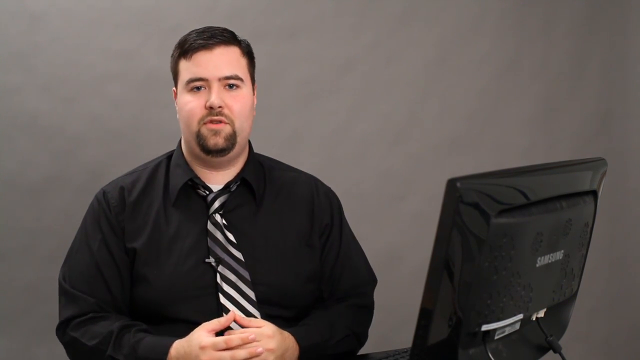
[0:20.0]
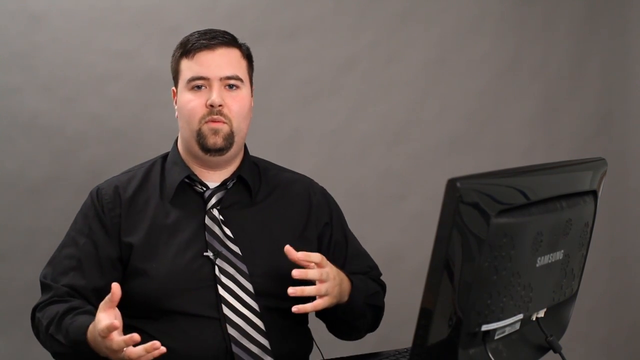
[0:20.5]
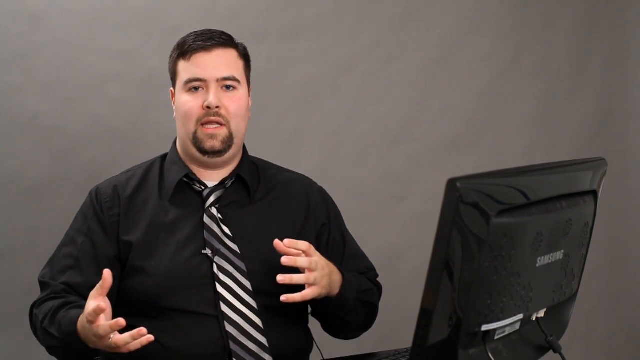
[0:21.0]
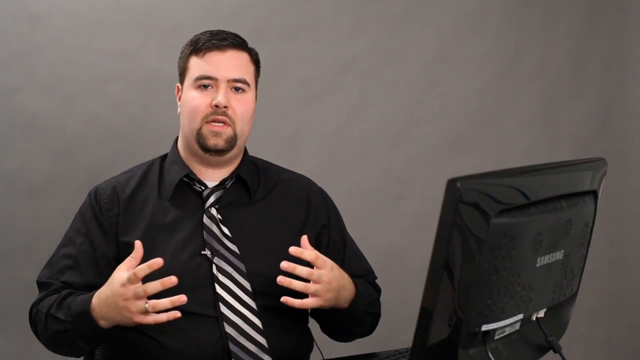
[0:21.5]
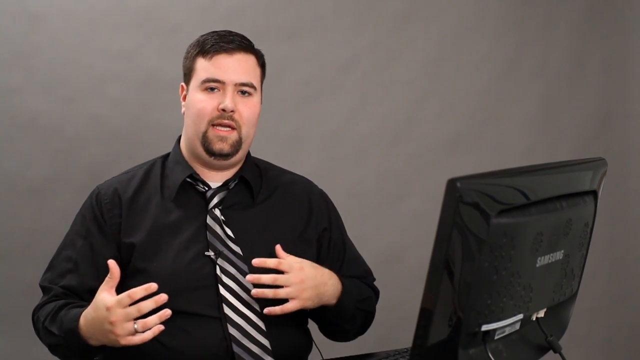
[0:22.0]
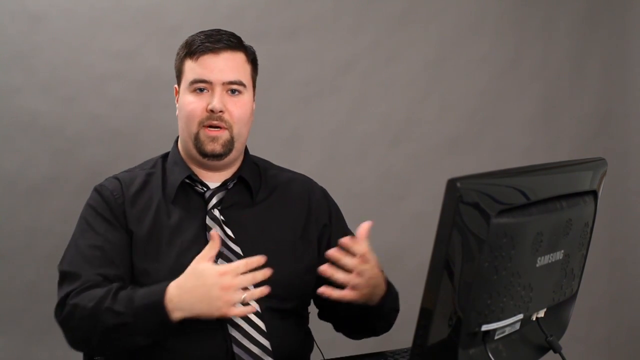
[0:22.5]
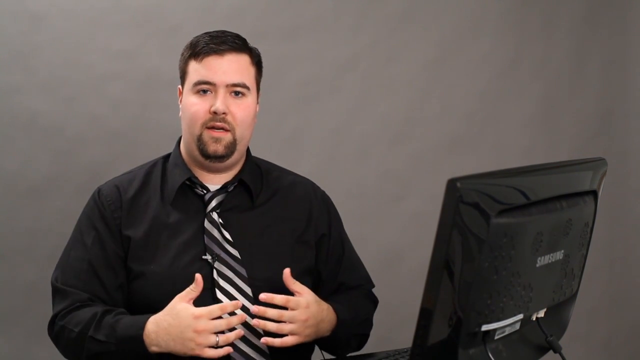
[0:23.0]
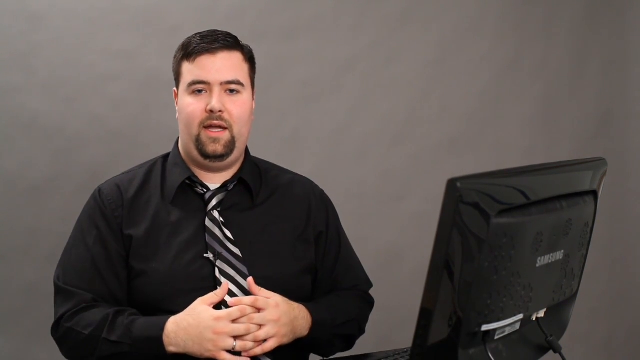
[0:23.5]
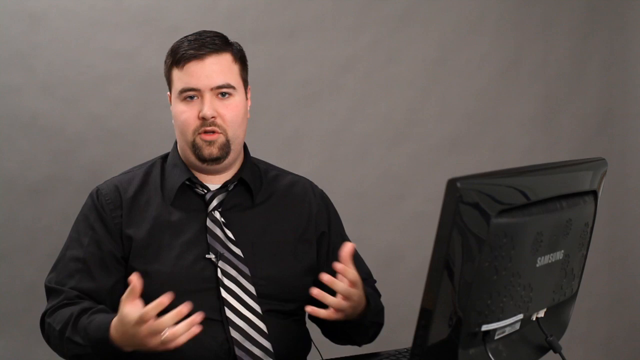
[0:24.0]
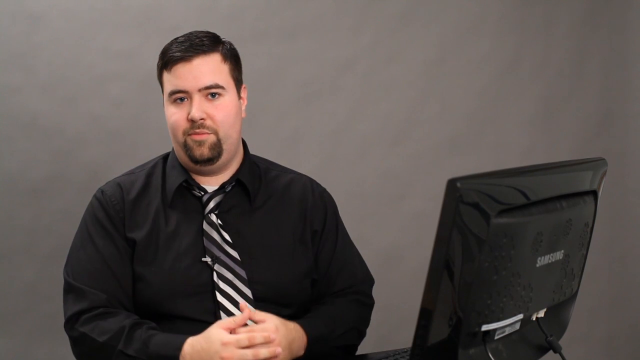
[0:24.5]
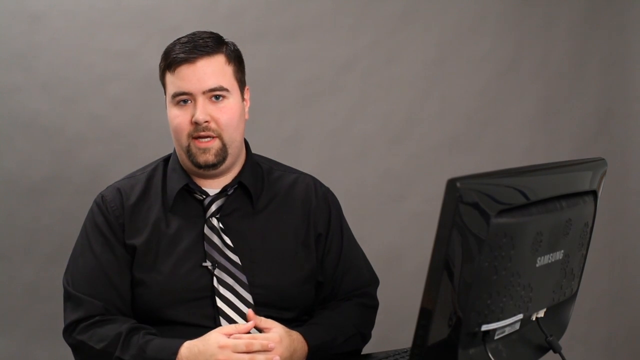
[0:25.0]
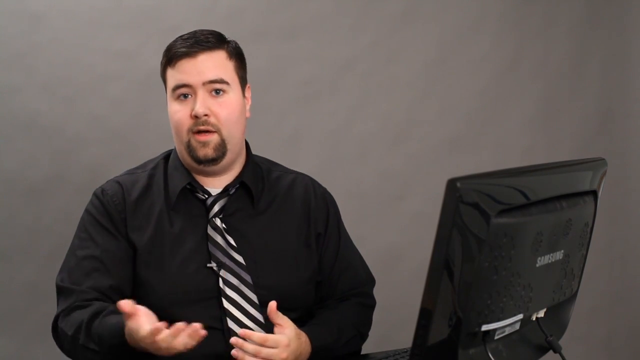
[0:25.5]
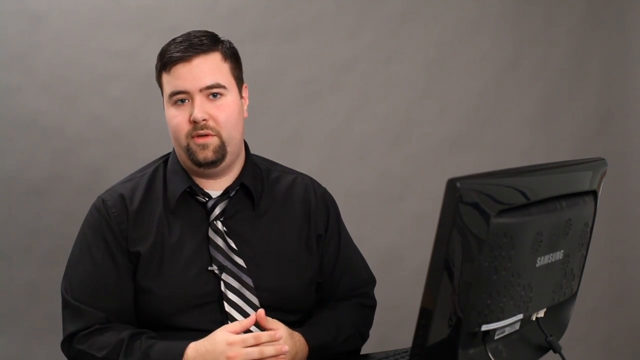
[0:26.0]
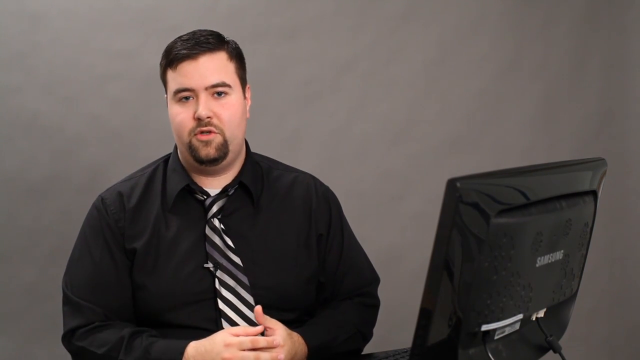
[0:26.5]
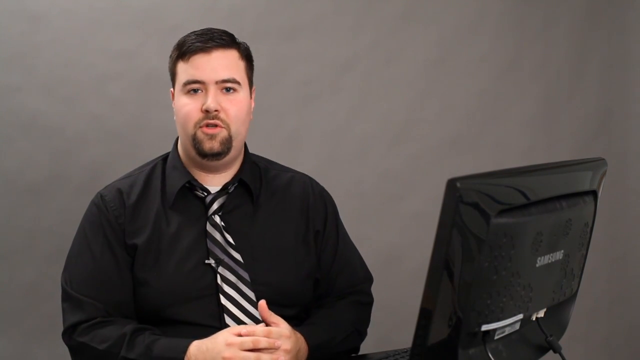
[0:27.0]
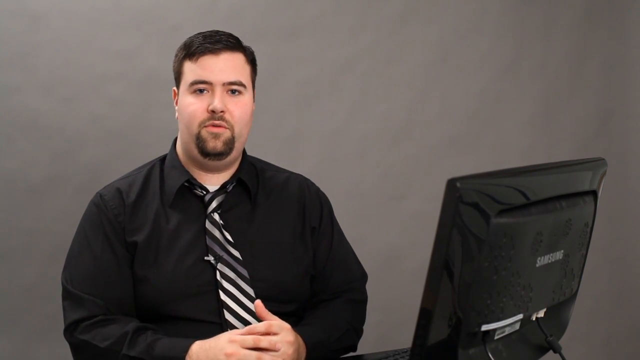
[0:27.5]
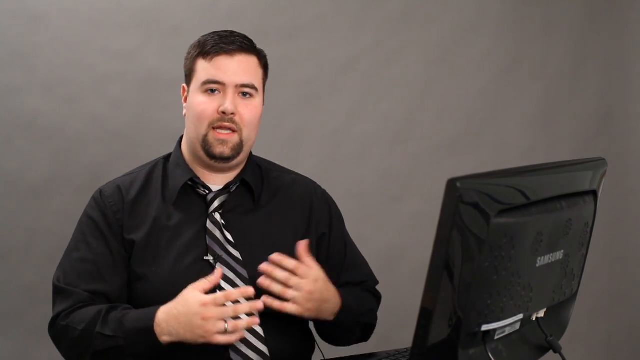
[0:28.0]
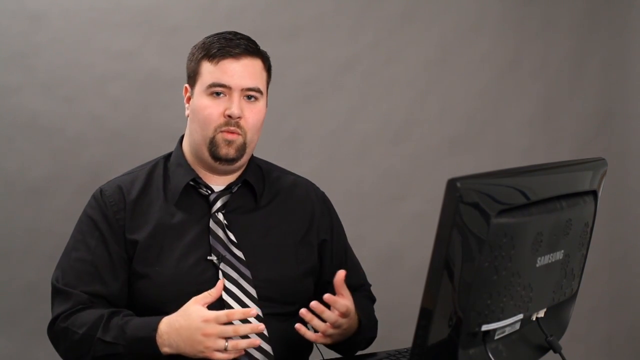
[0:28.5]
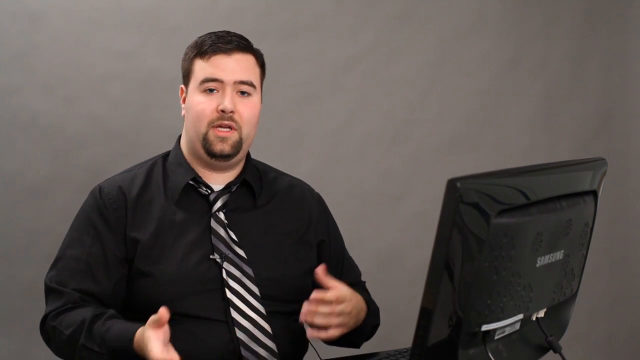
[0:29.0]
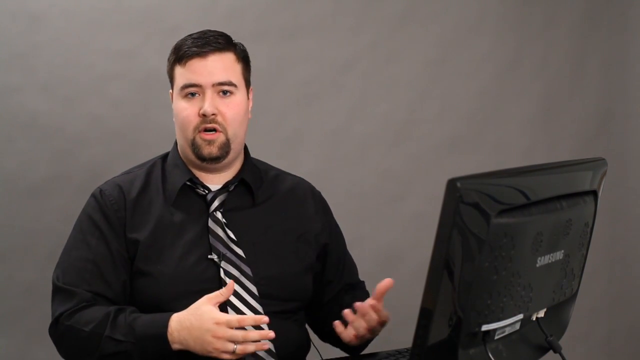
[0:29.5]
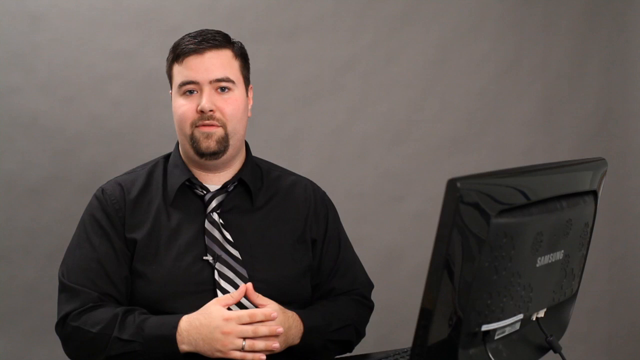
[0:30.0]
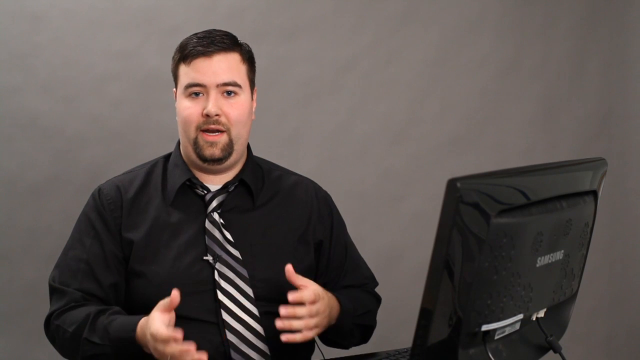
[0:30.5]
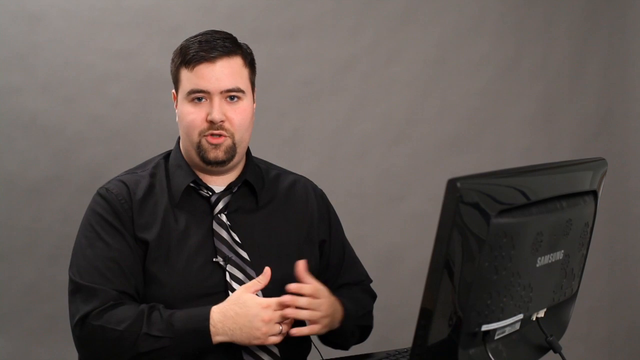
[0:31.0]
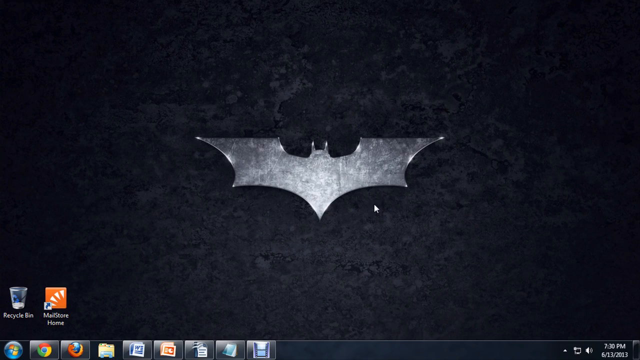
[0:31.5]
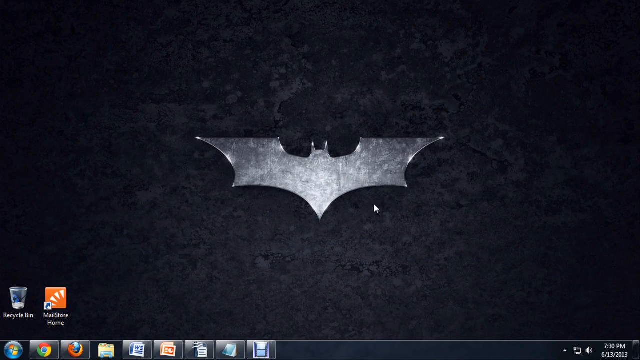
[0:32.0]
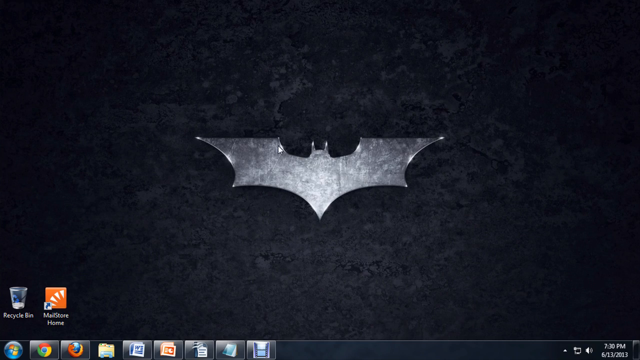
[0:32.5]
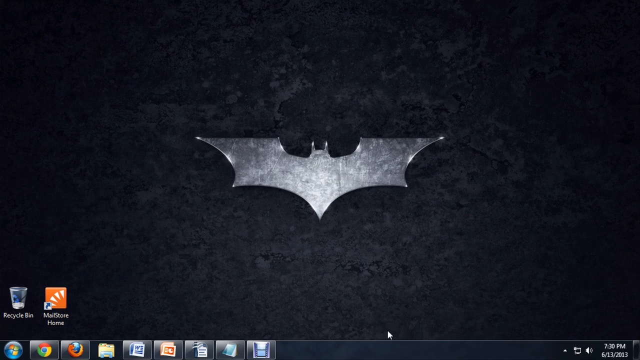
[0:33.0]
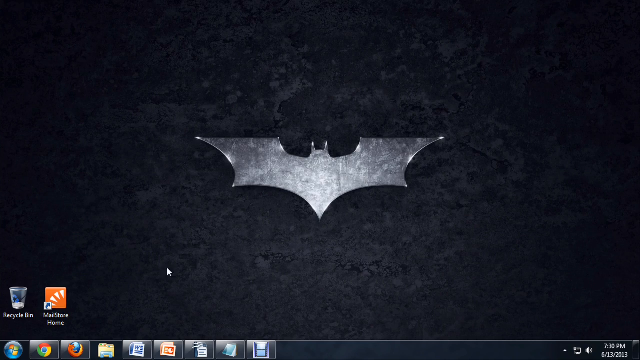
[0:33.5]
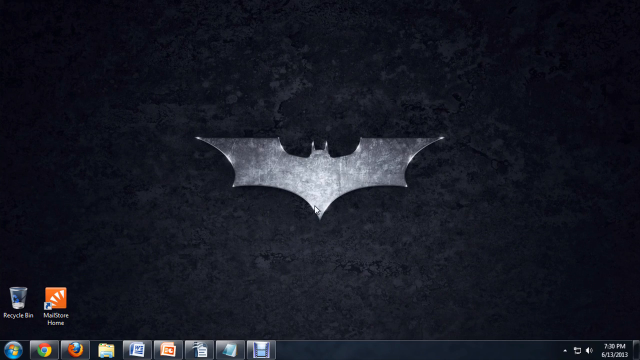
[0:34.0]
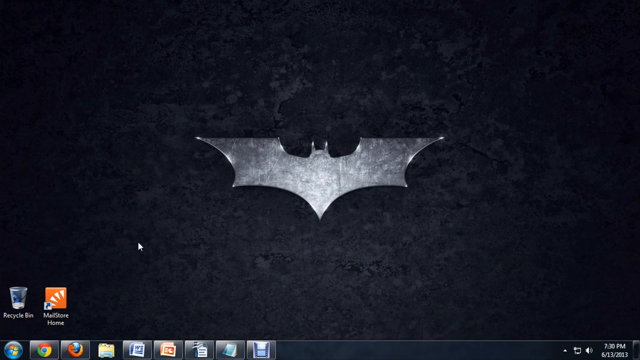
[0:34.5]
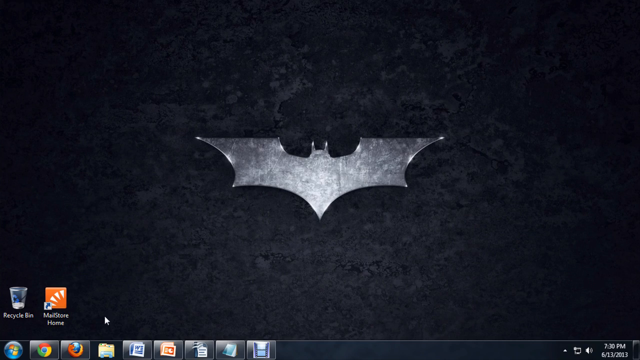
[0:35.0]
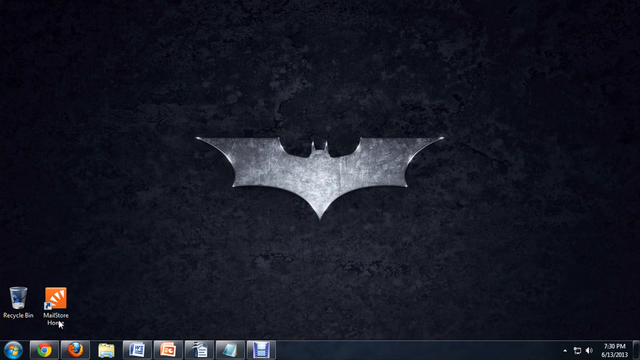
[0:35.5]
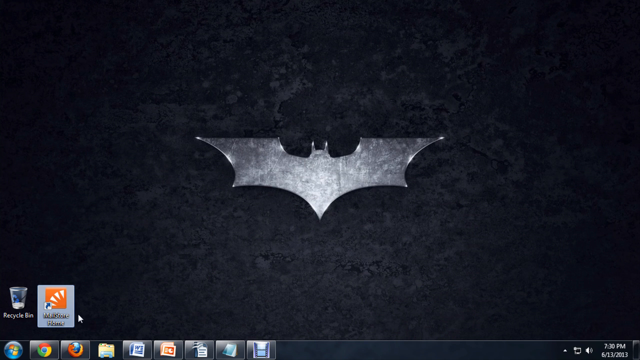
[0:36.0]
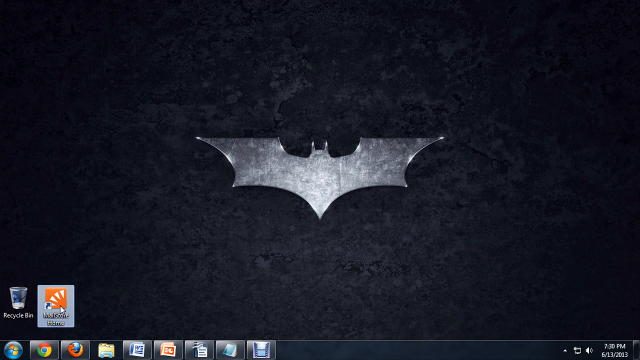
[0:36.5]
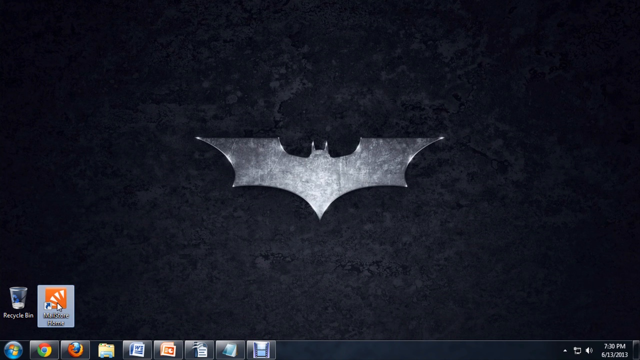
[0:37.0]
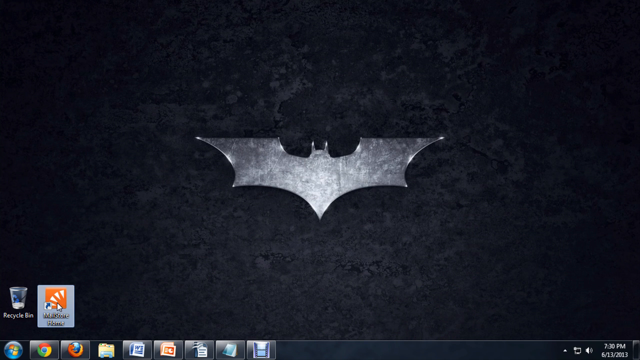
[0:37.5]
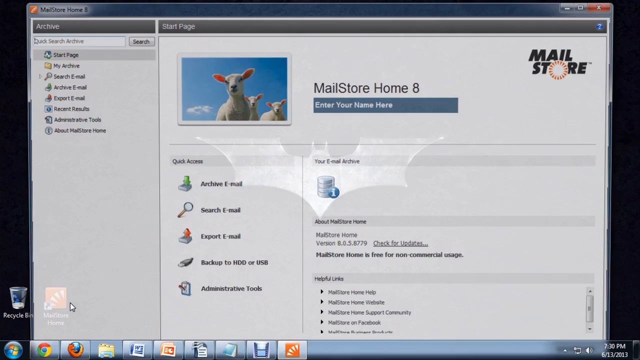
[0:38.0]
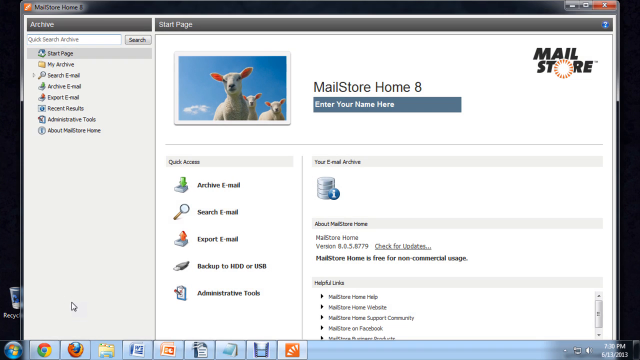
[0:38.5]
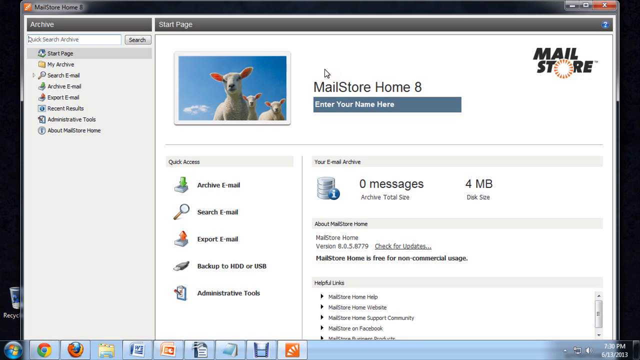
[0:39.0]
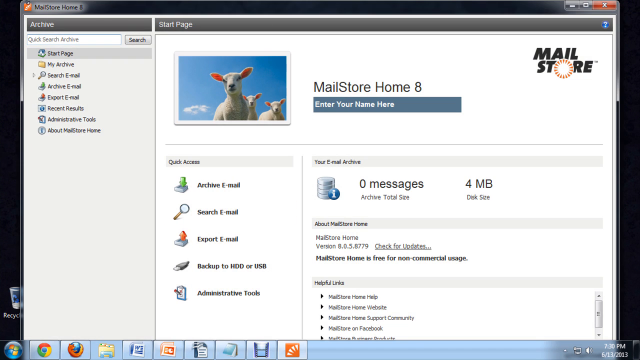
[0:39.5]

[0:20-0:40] The Caucasian man in the solid black long-sleeve collared shirt and the tie with white stripes, what look like a couple of gray stripes, and black stripes sits in front of what looks to be a Samsung monitor, possibly an all-in-one monitor and computer. He gestures with his hands as he talks, and he appears to be sitting at a table. The screen then flashes to the Batman symbol, which looks like the background of his laptop. The laptop appears to run Windows 7, with the Windows 7 start menu visible. He seems to have several tabs open, apparently a Word tab, a PowerPoint tab and some other unidentified tabs. He clicks one of them, opening an application with an orange-looking icon, possibly some kind of media store.